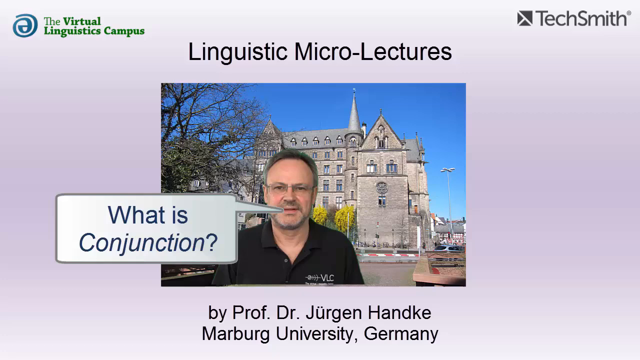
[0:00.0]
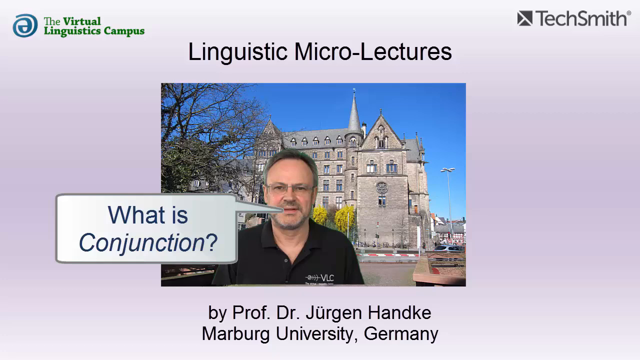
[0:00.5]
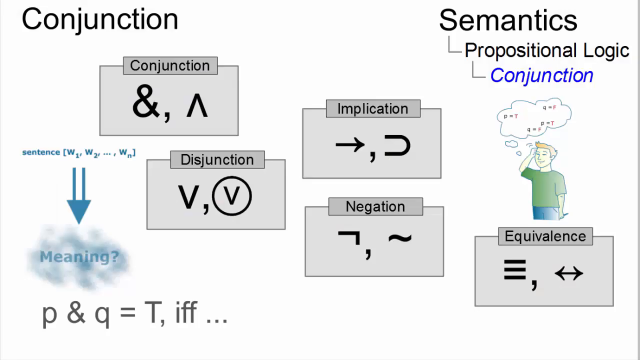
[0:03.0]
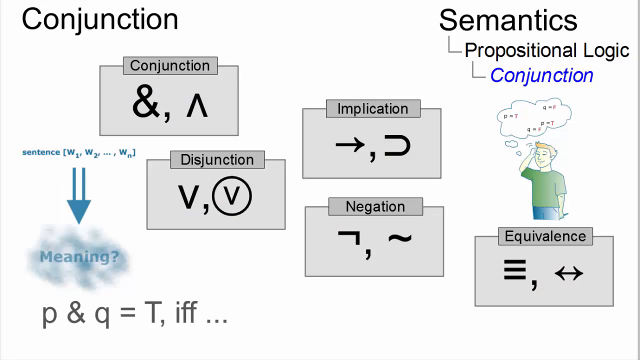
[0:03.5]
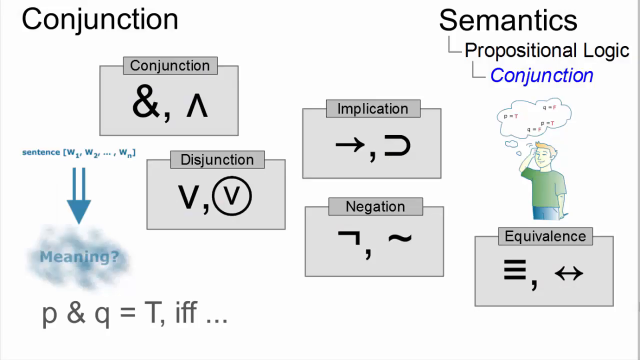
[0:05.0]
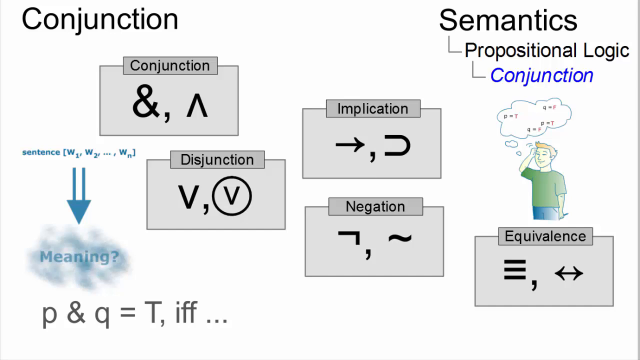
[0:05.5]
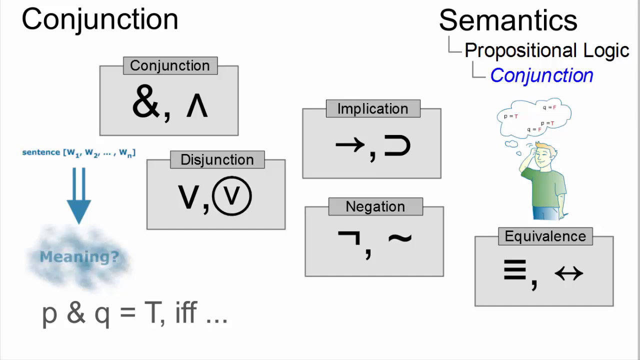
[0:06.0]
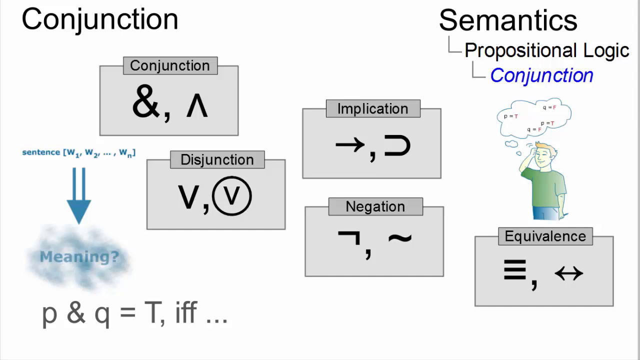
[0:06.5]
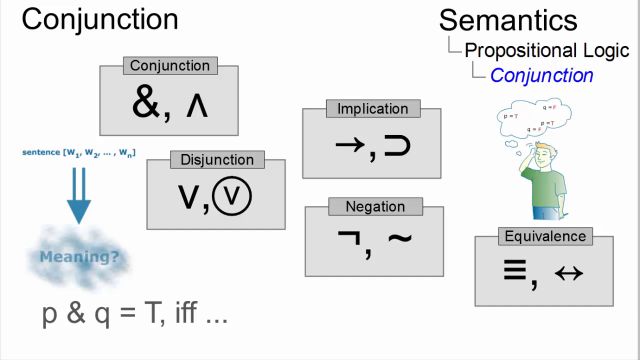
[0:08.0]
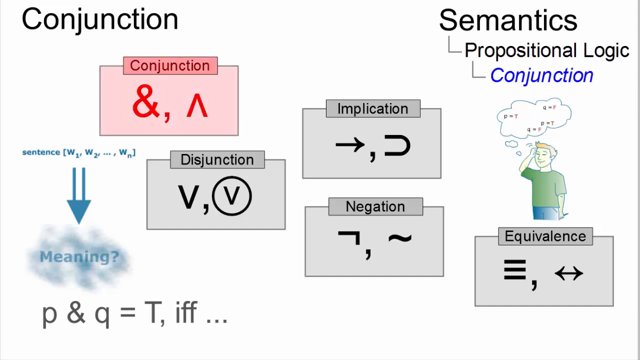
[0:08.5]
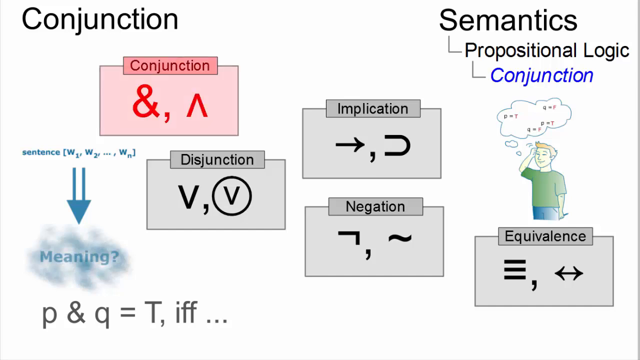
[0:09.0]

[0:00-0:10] The title "Linguistic micro lectures" appears, with "Thematic propositional logics" in the upper right corner and "Conjunction" in blue below it on the right side, about half an inch in. An animated cartoon character holds his right hand up to his right forehead; he is seen in slight profile, looking off toward the right of the screen, diagonal to the viewer. A cloud above his head contains numerous letters and numbers. In the upper left corner is "conjunction" with five boxes showing the different symbols for conjunction, disjunction, implication, negation and equivalence; the equivalence box has a three-line symbol. A professor, Jurgen Hundig, explains what a conjunction is.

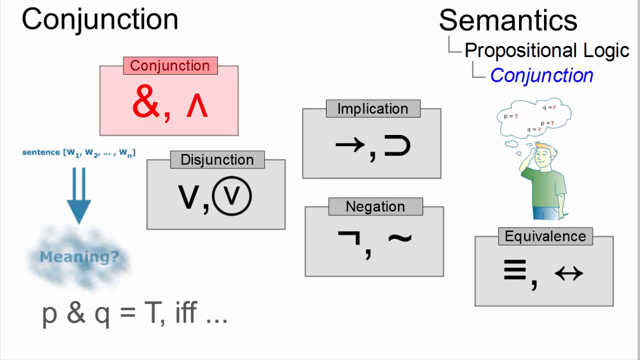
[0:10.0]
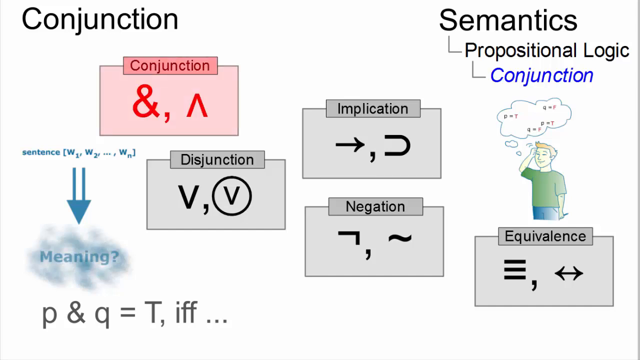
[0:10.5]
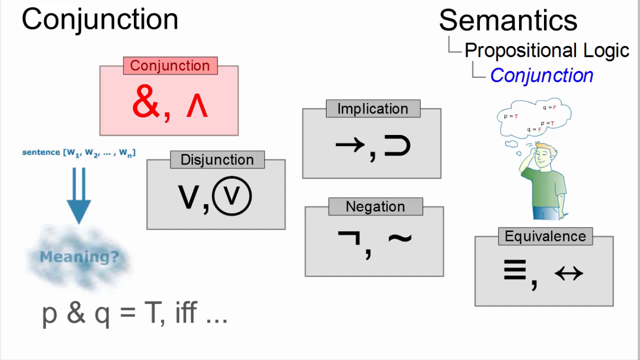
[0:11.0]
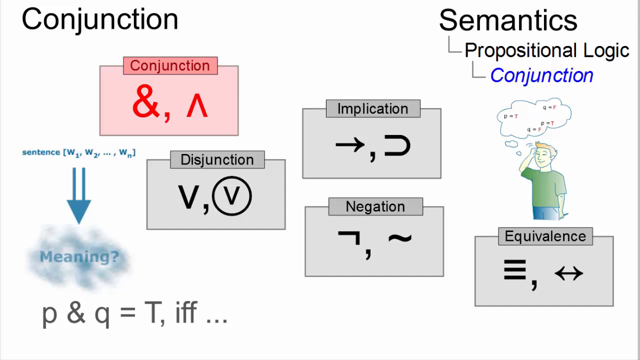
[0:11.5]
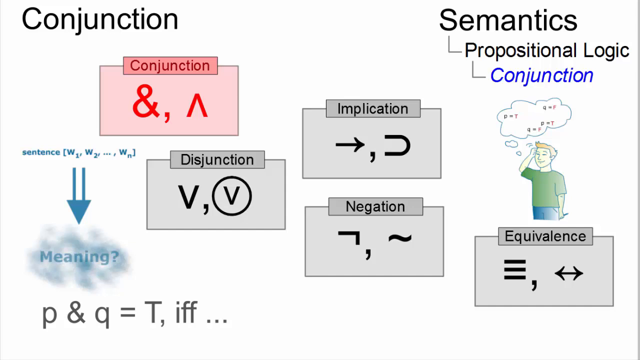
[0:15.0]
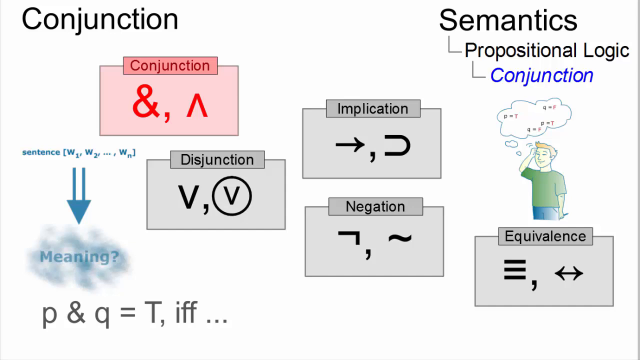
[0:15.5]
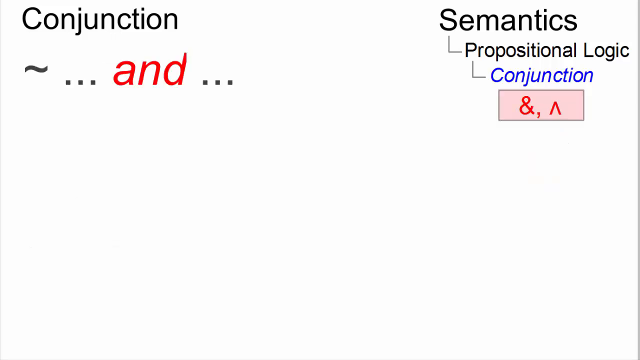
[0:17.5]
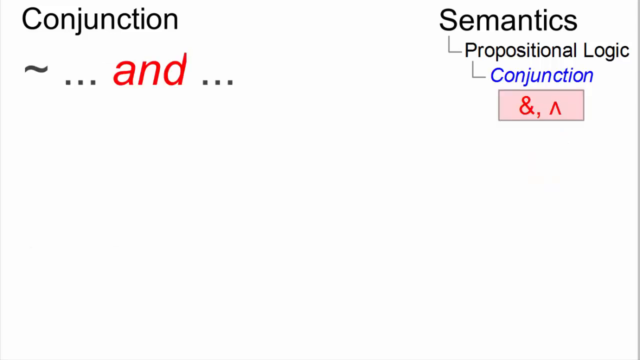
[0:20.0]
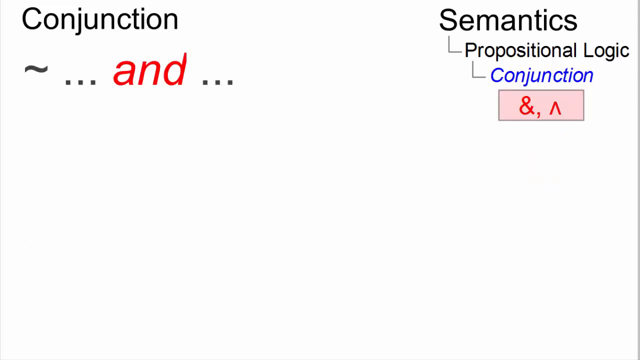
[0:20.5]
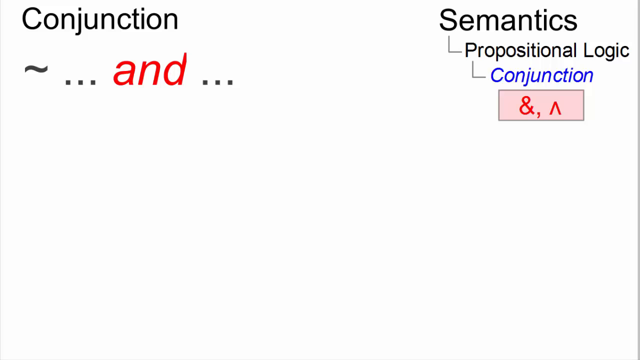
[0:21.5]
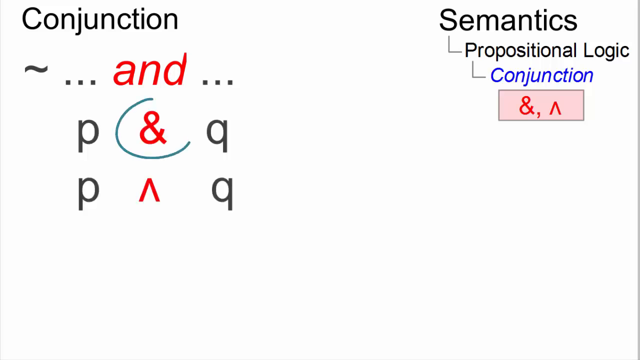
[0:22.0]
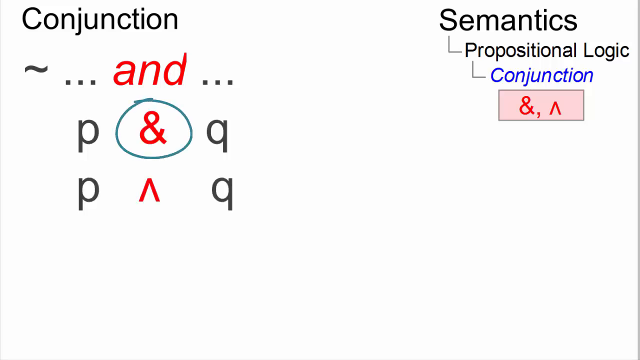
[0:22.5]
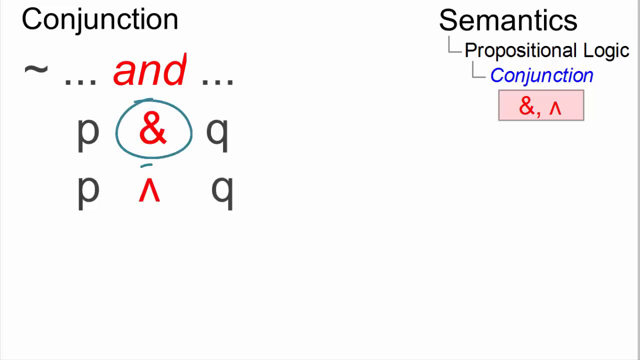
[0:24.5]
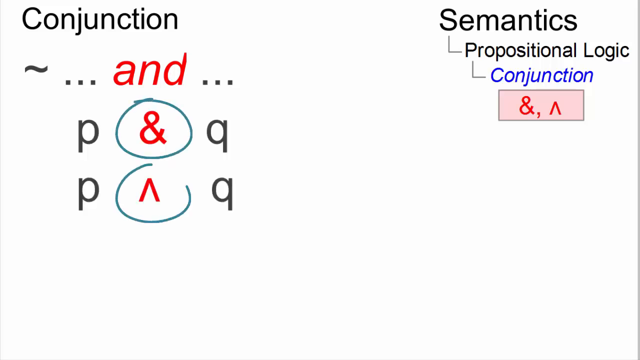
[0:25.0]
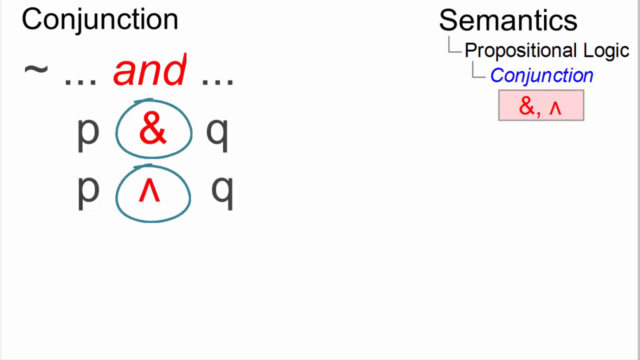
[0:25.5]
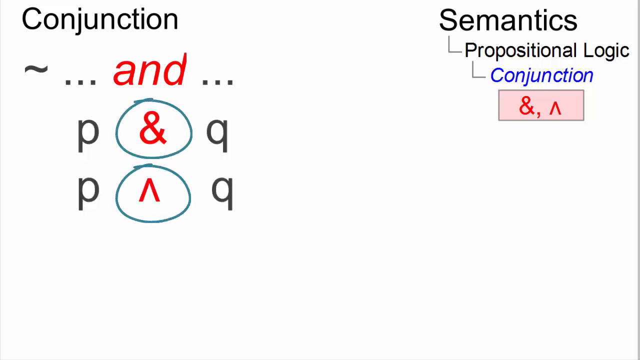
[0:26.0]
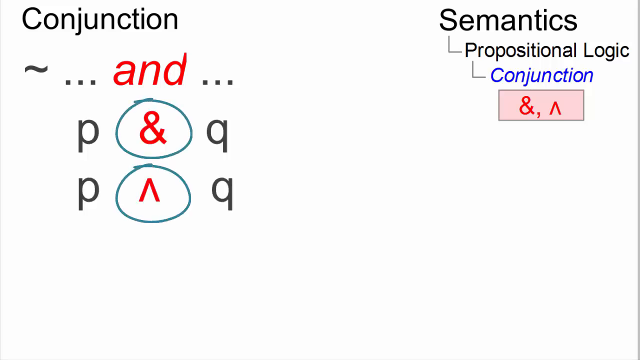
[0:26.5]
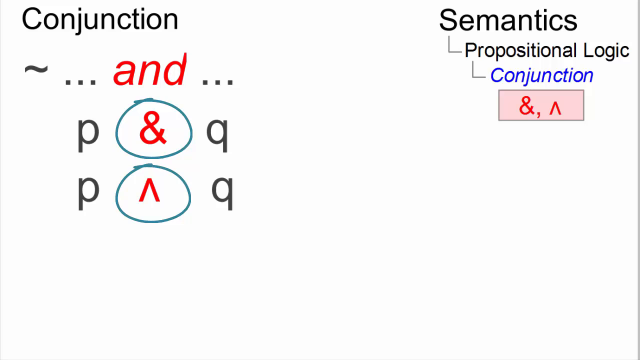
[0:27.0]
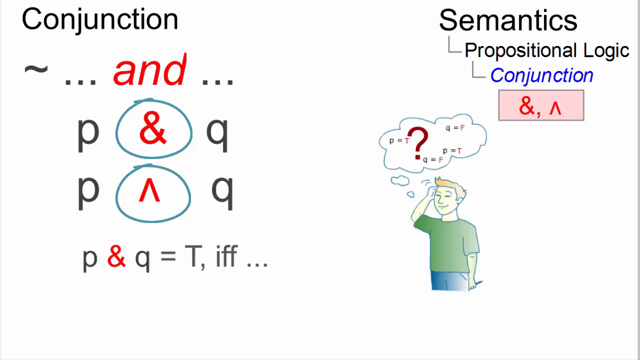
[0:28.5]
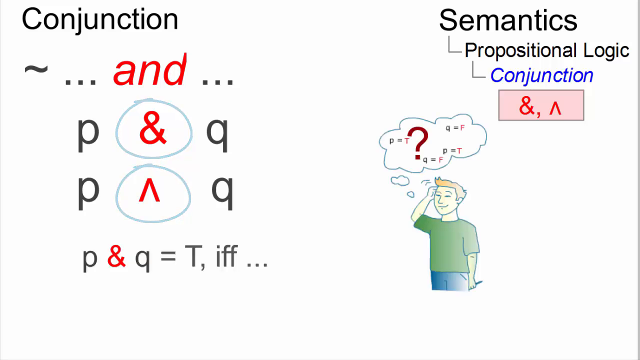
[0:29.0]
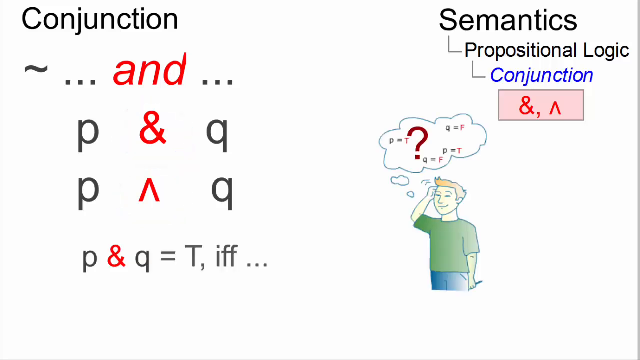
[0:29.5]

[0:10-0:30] "Conjunction" is in the top left corner, and straight across in the right corner are the words semantics, propositional logic and, on a line below, conjunction. Under "conjunction" on the left is an and sign, a comma and an upside-down arrow. The word "and" appears with three dots before and three dots after it. Below are the letter P, the and sign and Q, then a small p and small q with an upside-down arrow like a V between them. Below that is "P and Q equal T, IFF" followed by three small dots. A cartoon gentleman on the right side of the page wears a green shirt and blue trousers, with a question mark above his head.